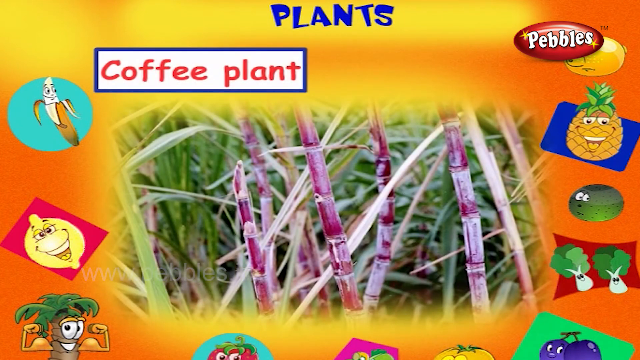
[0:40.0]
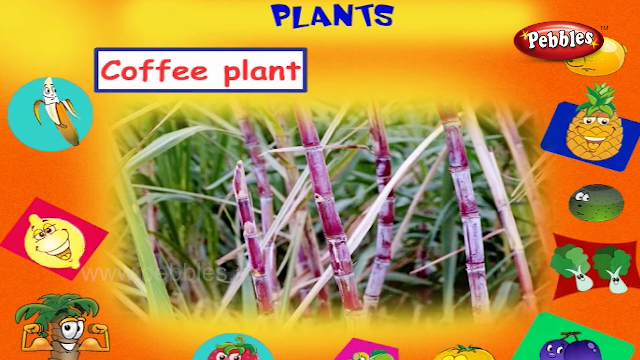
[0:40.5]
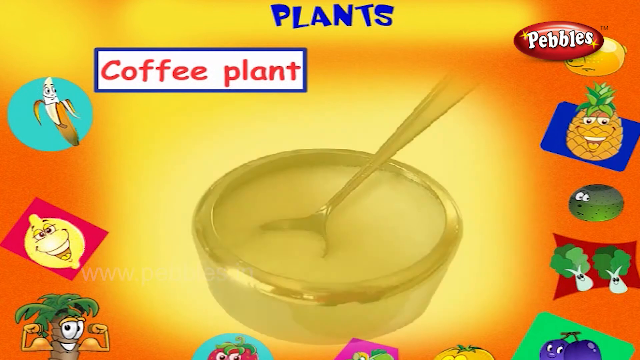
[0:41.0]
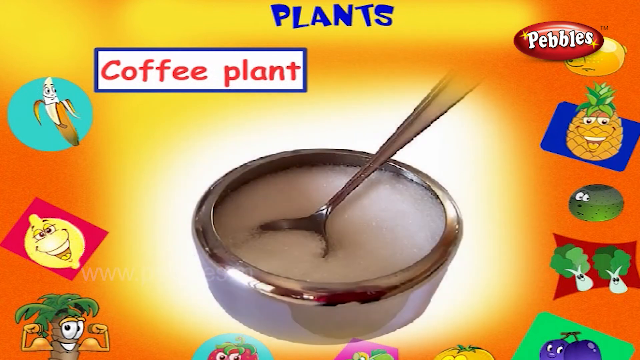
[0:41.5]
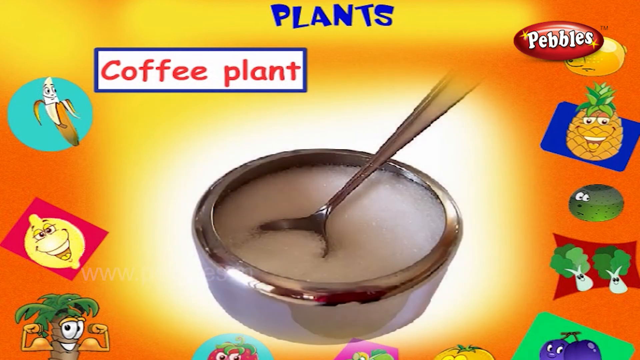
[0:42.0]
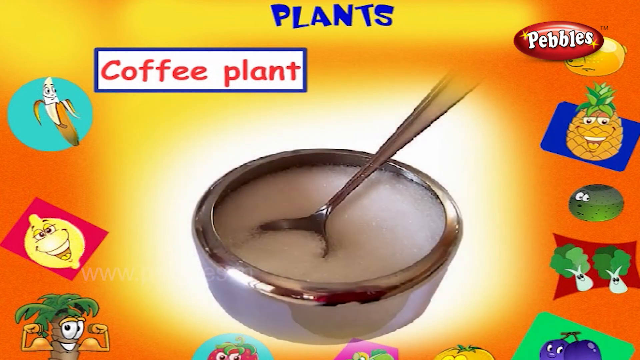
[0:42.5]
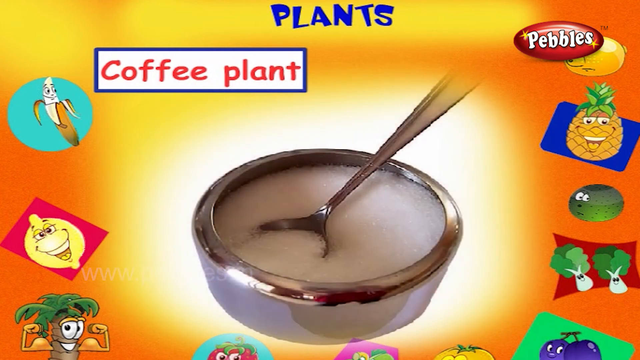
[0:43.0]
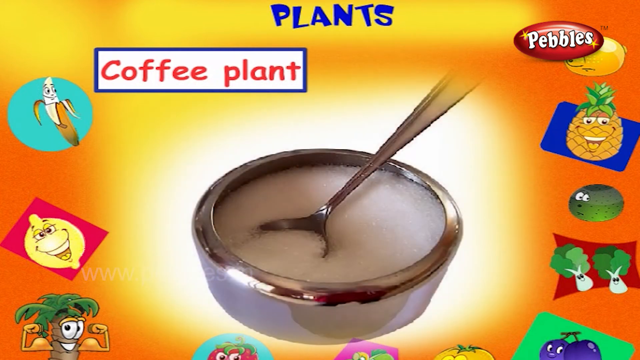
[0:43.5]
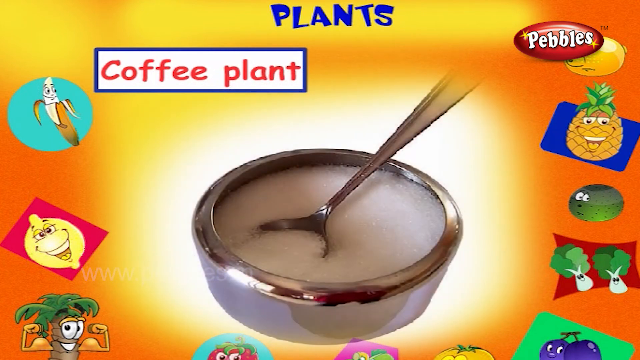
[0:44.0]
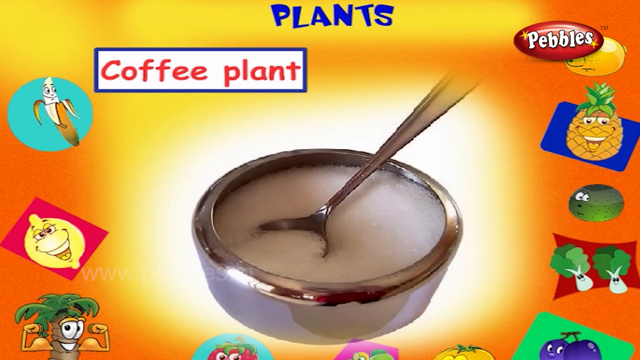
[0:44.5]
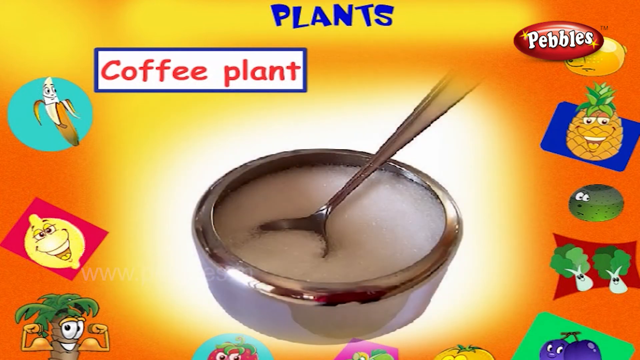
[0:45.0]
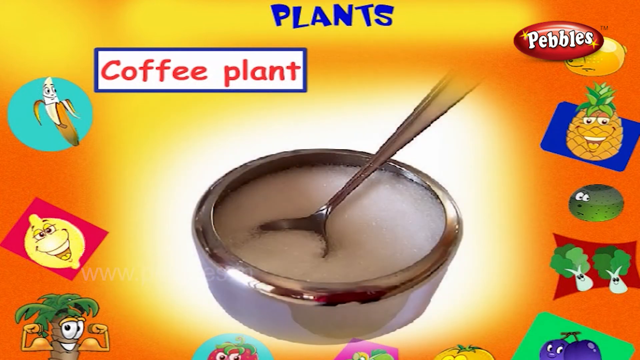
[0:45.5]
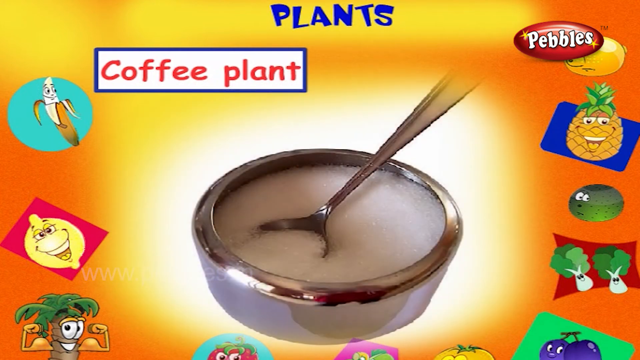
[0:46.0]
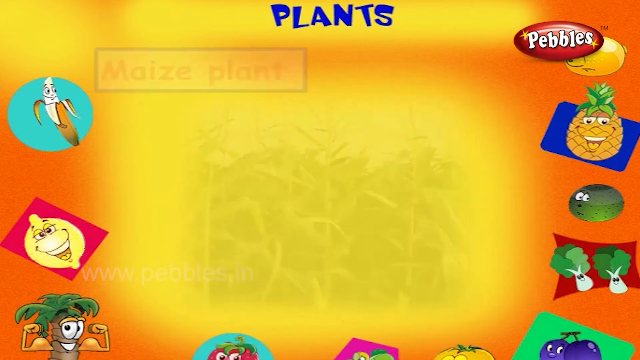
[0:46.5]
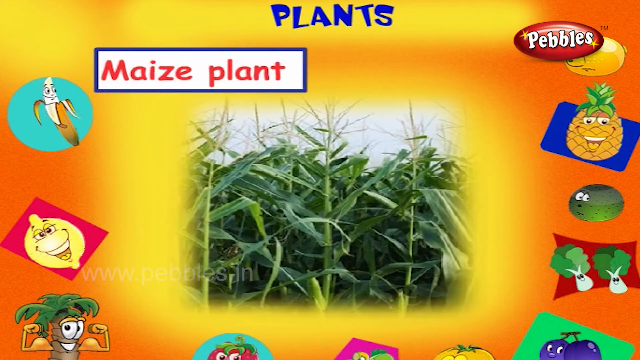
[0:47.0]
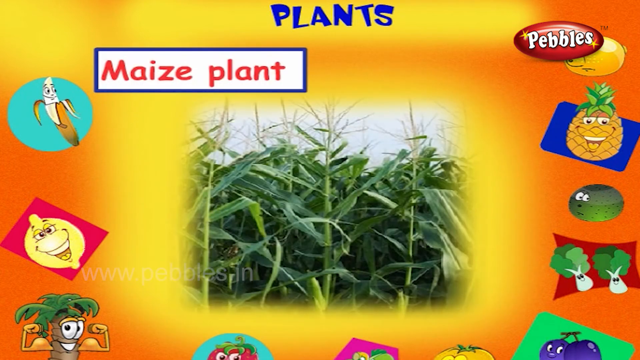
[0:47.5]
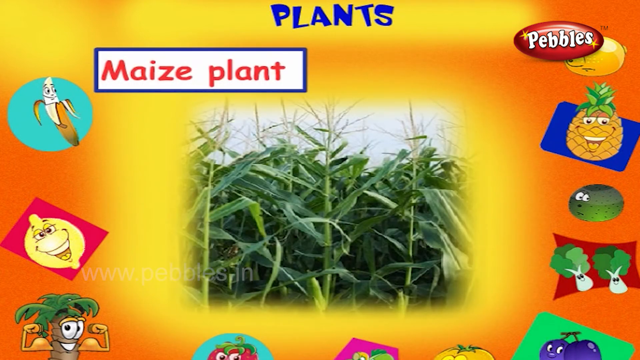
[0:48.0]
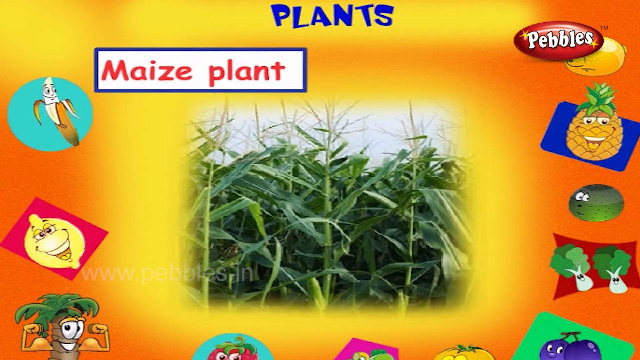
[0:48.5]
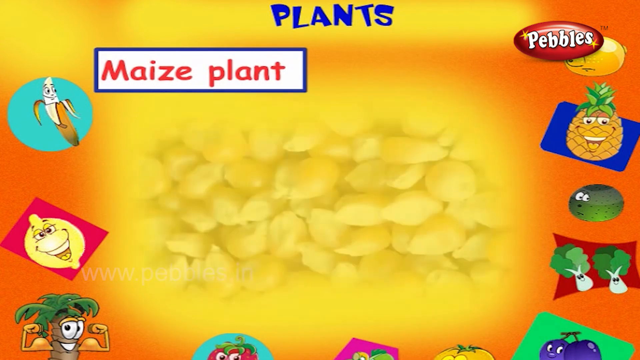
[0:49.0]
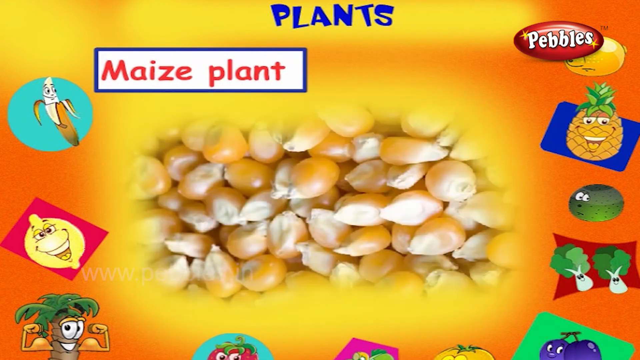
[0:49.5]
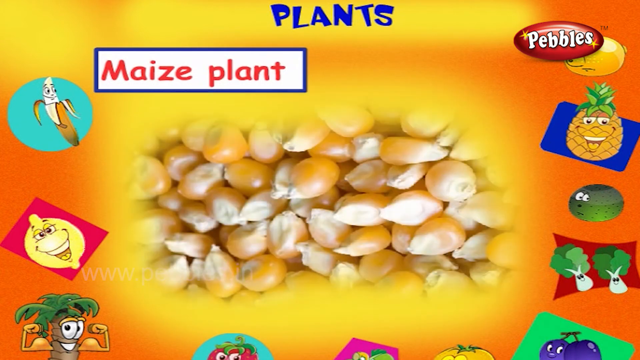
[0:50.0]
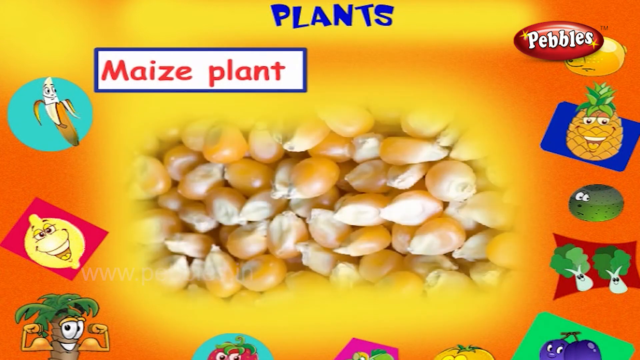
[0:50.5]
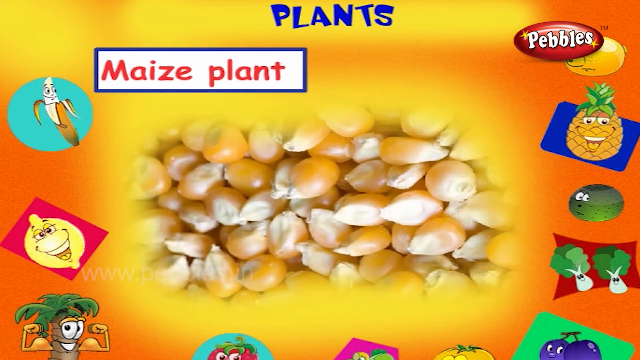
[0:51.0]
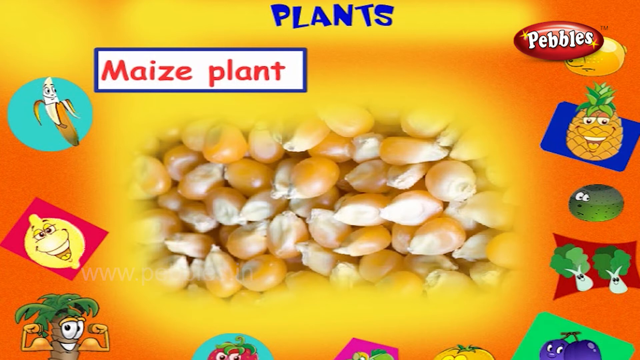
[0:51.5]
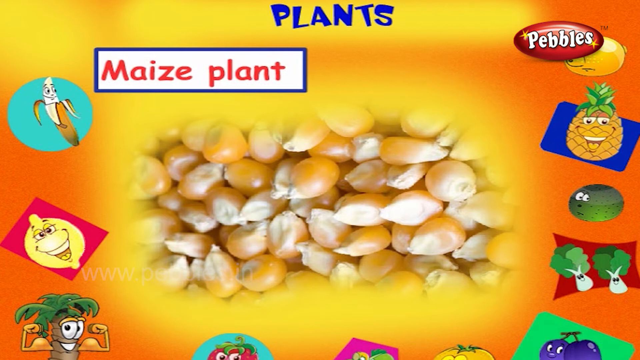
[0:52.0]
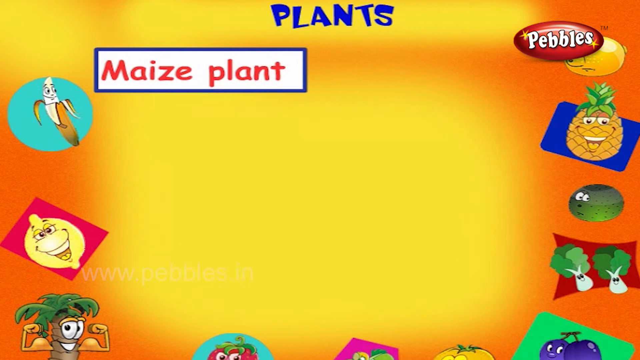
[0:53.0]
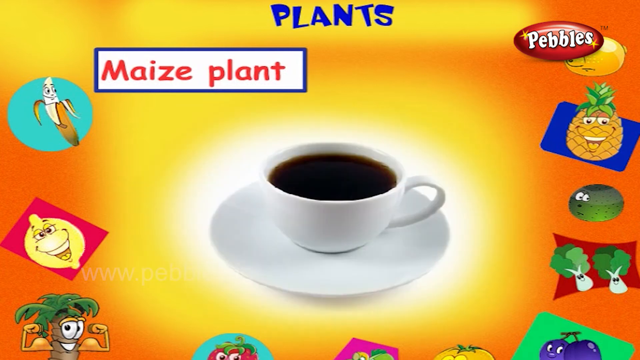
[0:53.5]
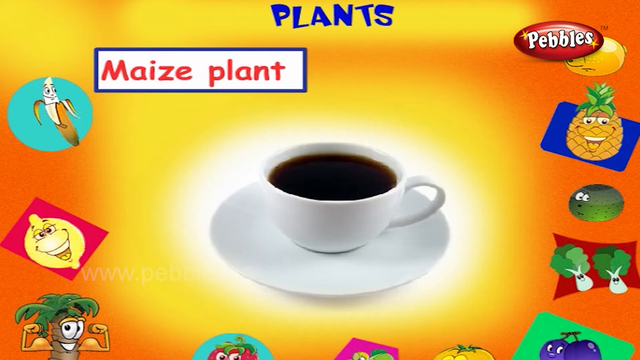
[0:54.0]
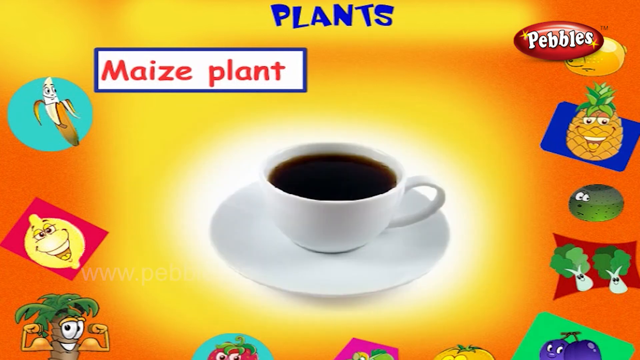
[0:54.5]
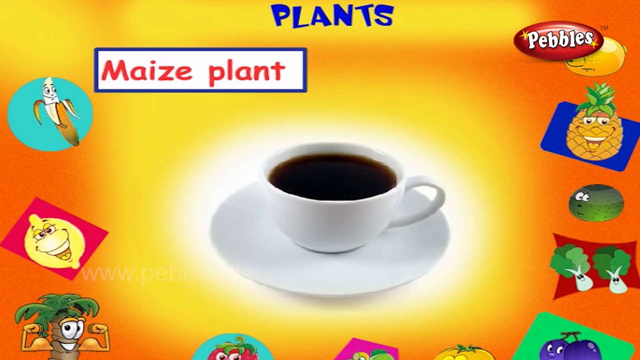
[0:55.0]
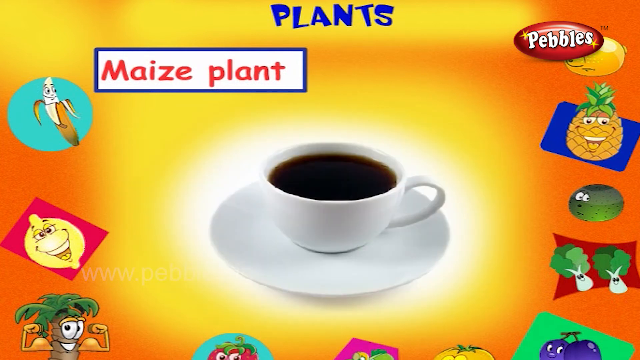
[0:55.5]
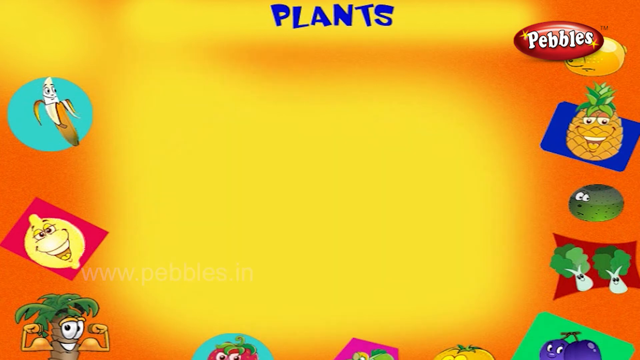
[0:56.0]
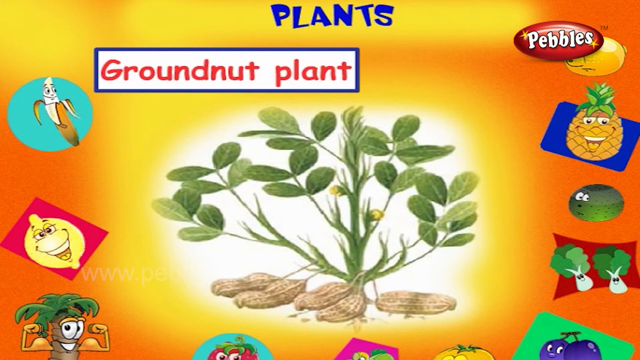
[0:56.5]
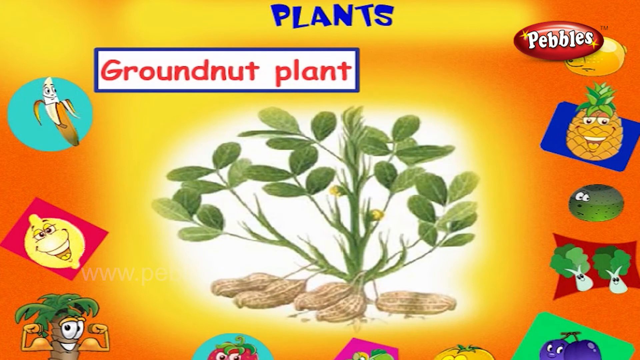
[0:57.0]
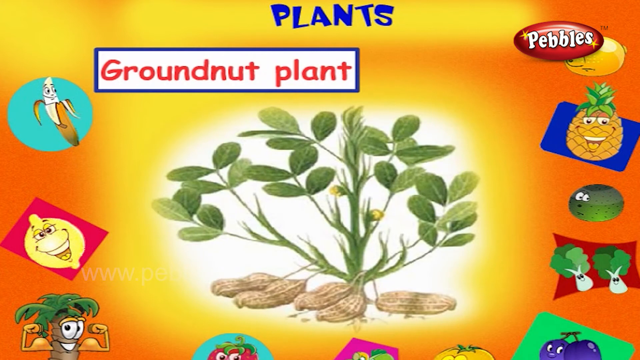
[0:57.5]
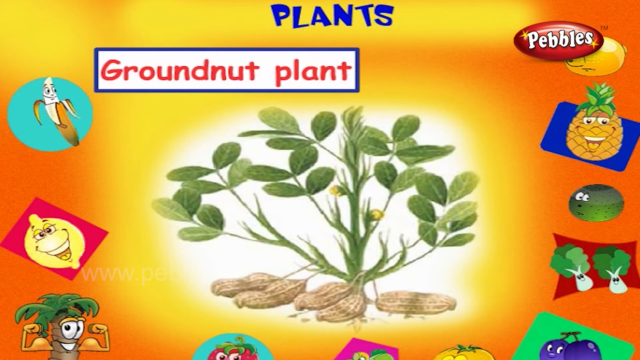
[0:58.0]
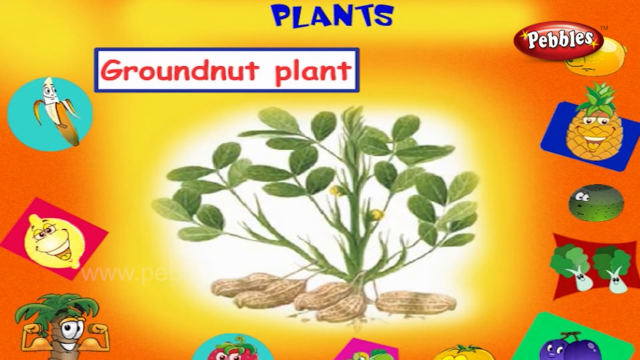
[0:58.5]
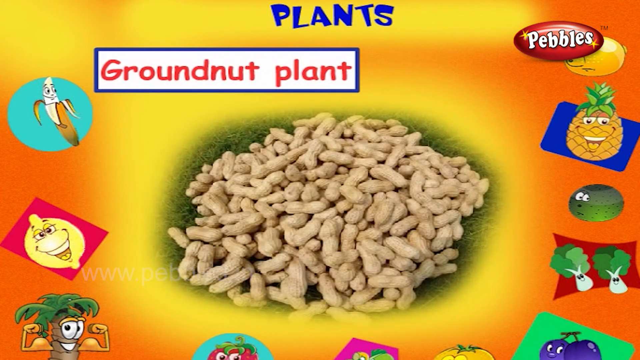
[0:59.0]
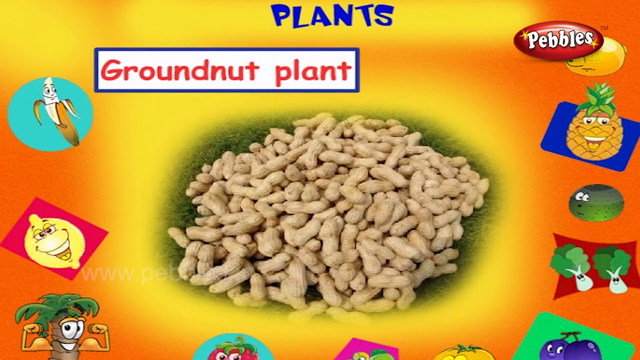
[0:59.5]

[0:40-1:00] More plants are shown with their products: the coffee fruit, then the end product, coffee in a bowl with a spoon on it. A maize plant is shown, followed by a picture of maize grains from it. Coffee appears, then coffee in a cup. Other plants follow with their end products: sugar cane with sugar, maize with maize grains, a coffee plant with coffee, and a groundnut plant with groundnuts.